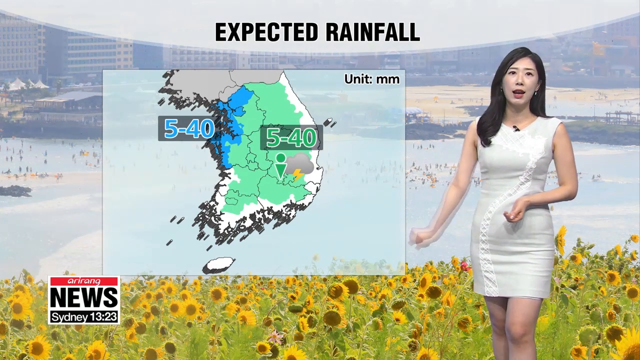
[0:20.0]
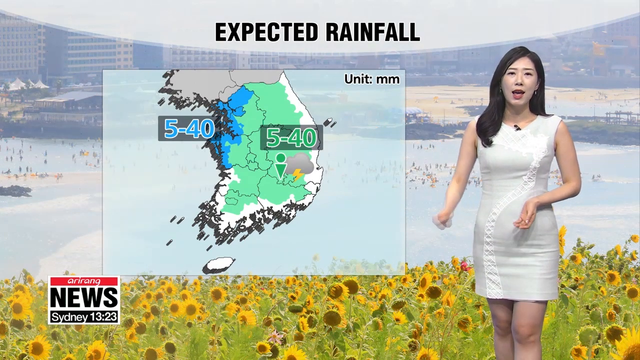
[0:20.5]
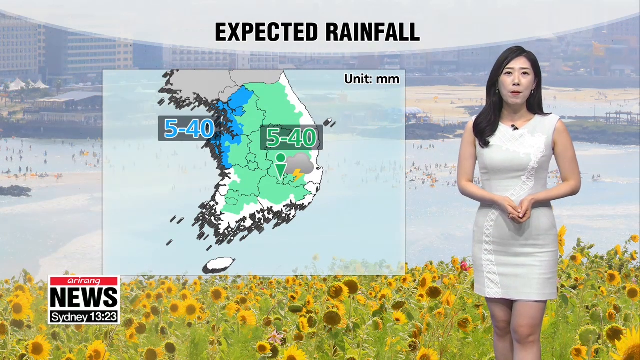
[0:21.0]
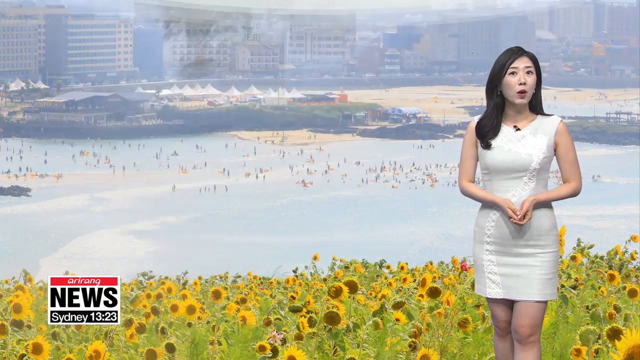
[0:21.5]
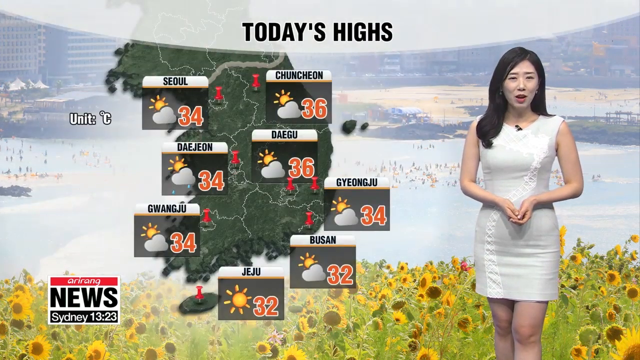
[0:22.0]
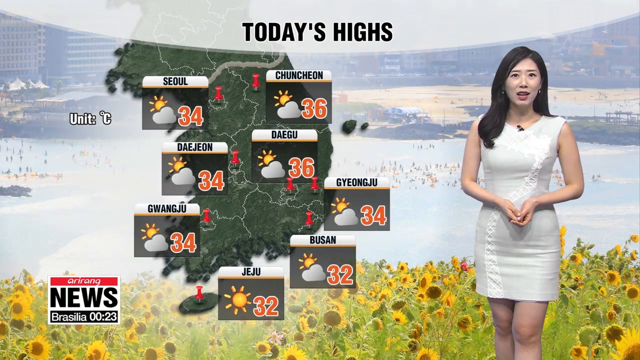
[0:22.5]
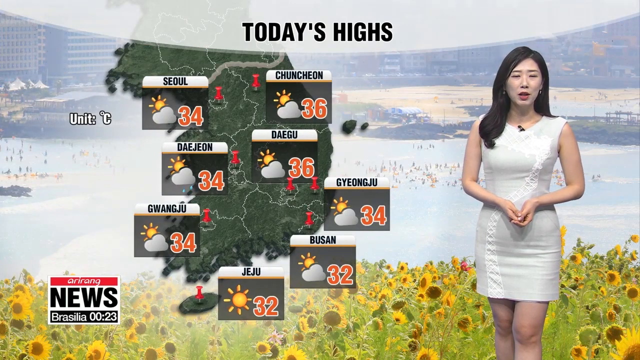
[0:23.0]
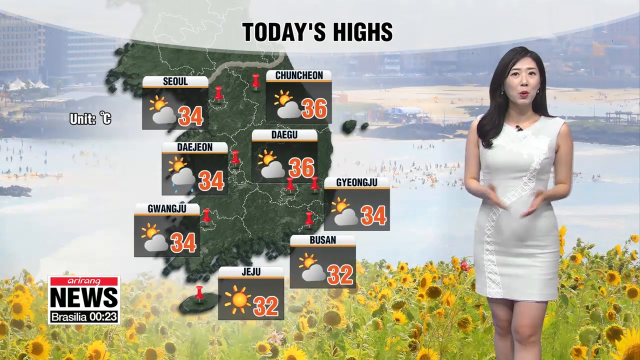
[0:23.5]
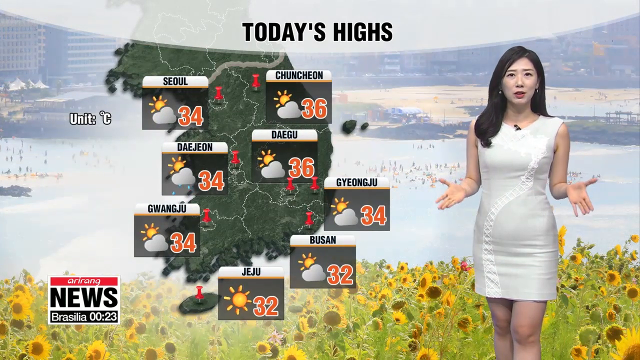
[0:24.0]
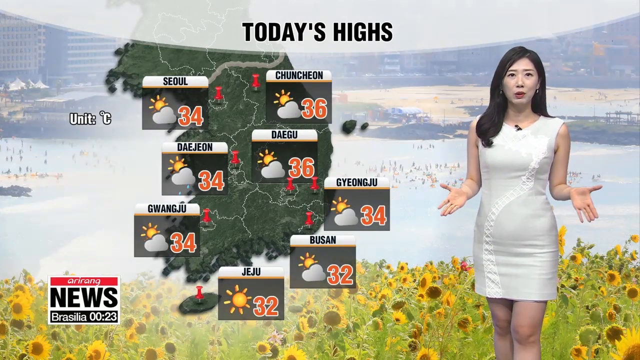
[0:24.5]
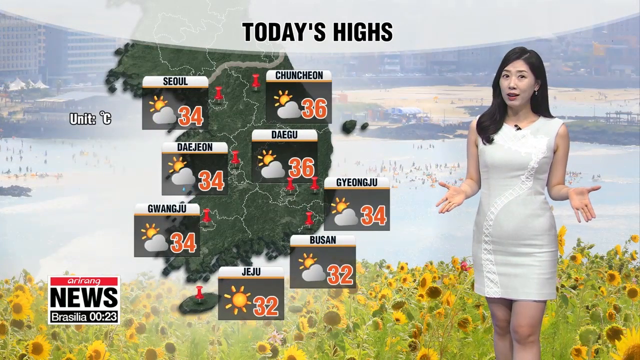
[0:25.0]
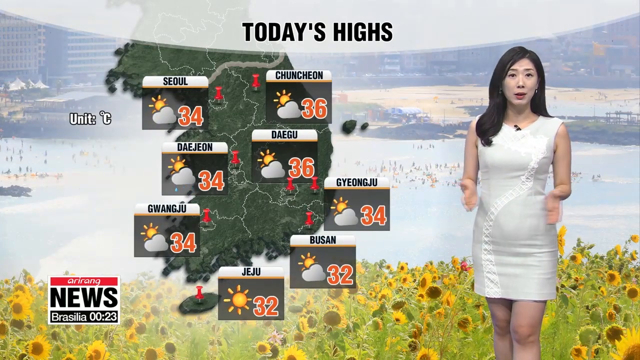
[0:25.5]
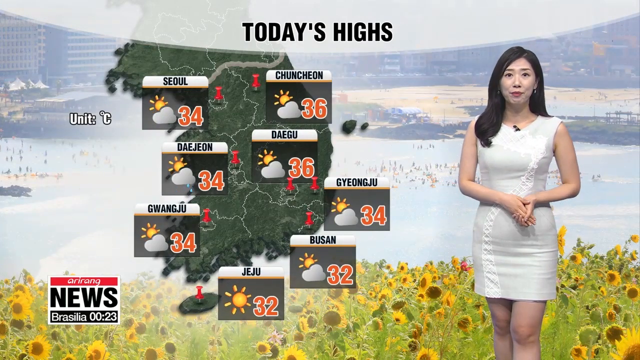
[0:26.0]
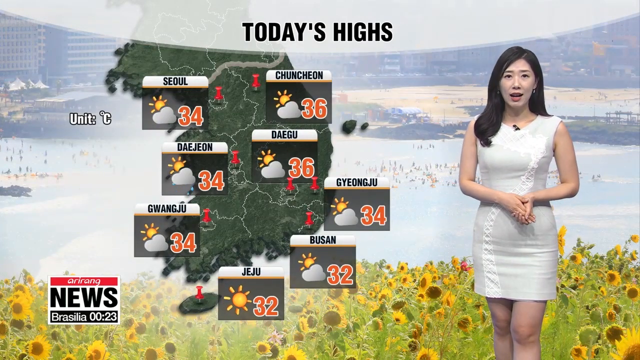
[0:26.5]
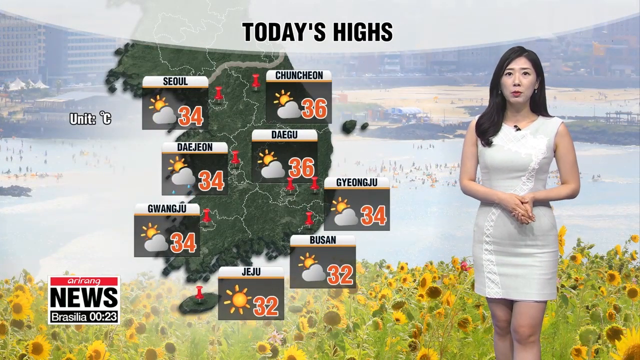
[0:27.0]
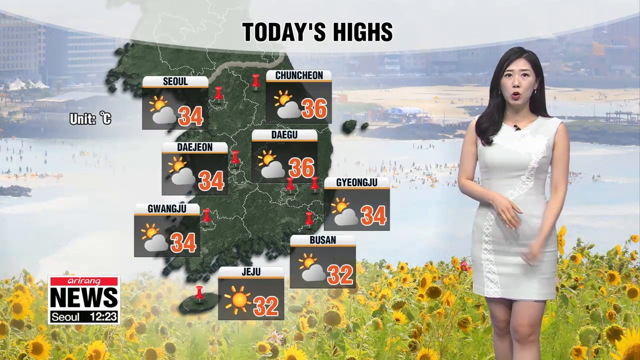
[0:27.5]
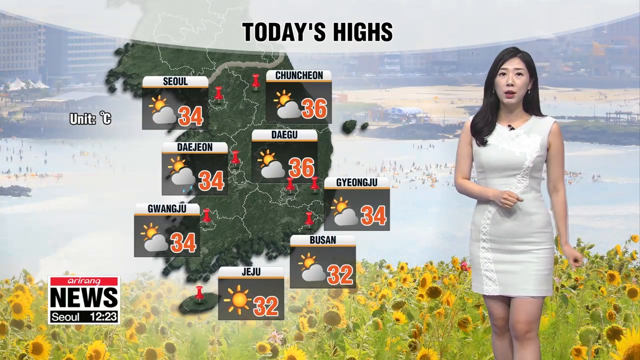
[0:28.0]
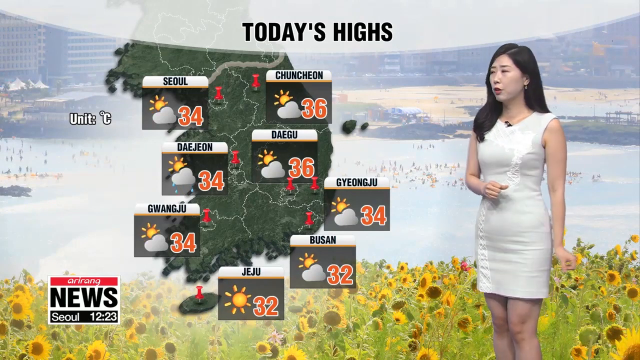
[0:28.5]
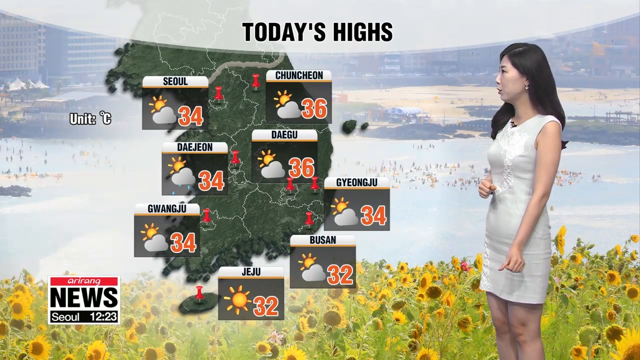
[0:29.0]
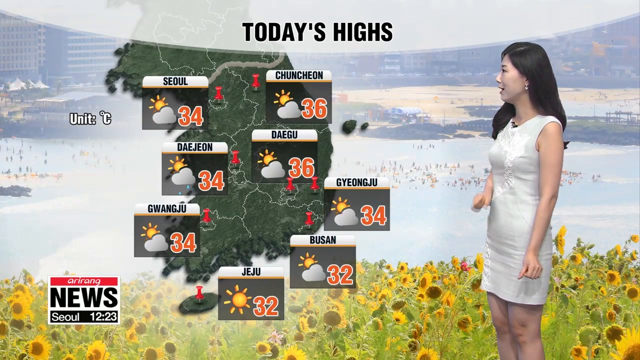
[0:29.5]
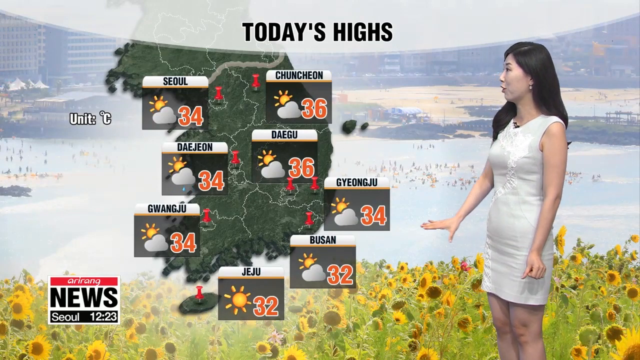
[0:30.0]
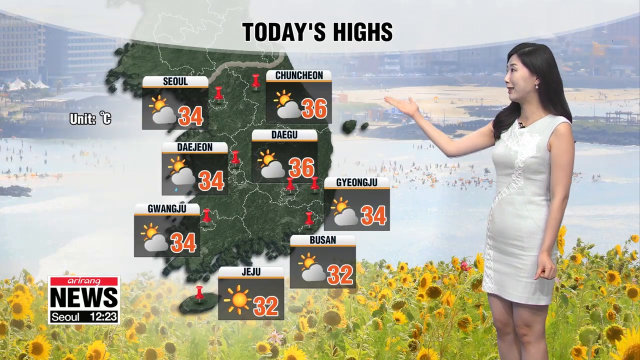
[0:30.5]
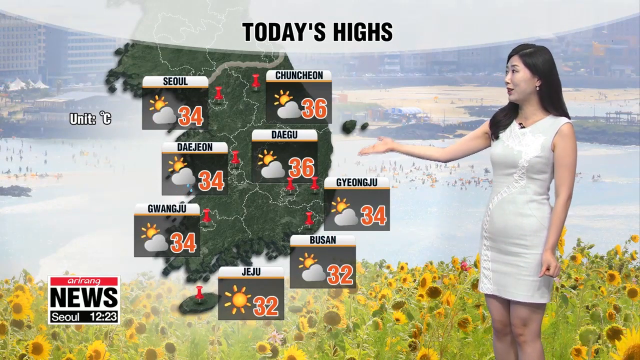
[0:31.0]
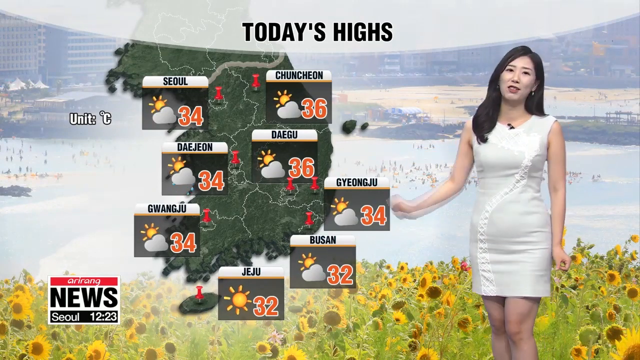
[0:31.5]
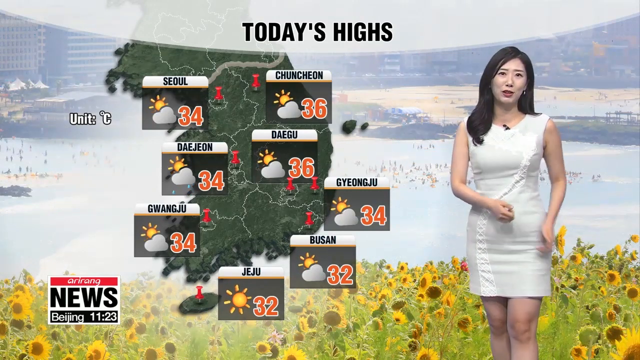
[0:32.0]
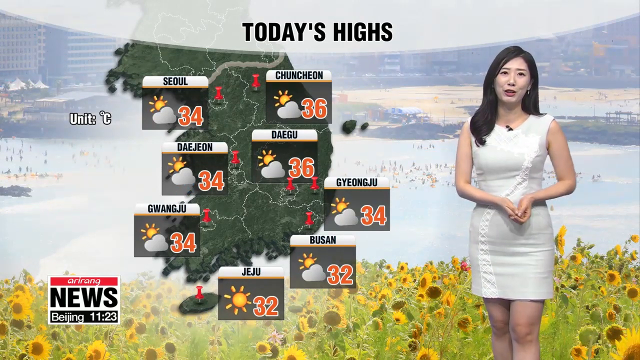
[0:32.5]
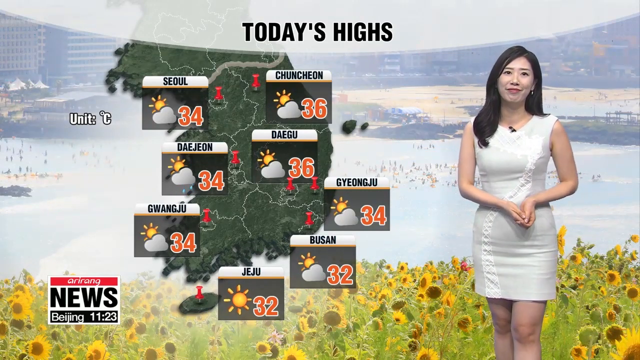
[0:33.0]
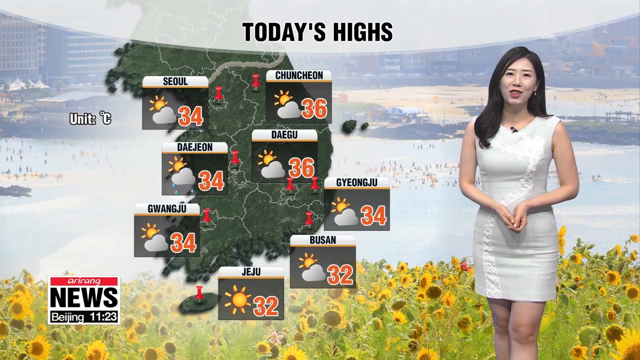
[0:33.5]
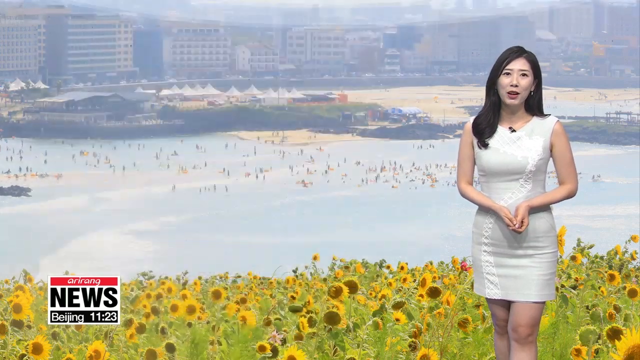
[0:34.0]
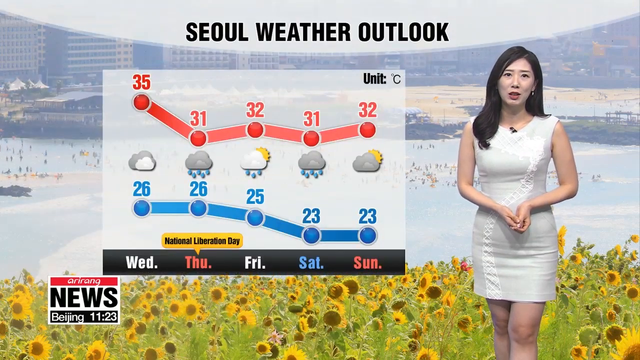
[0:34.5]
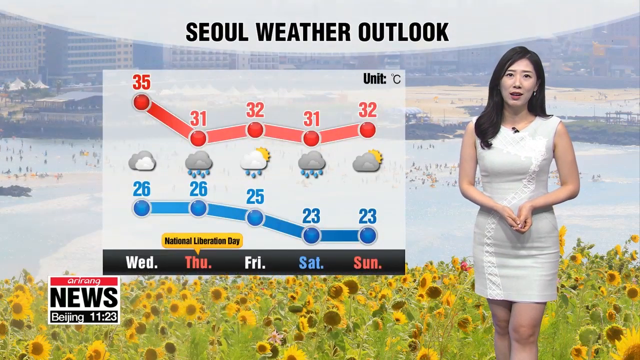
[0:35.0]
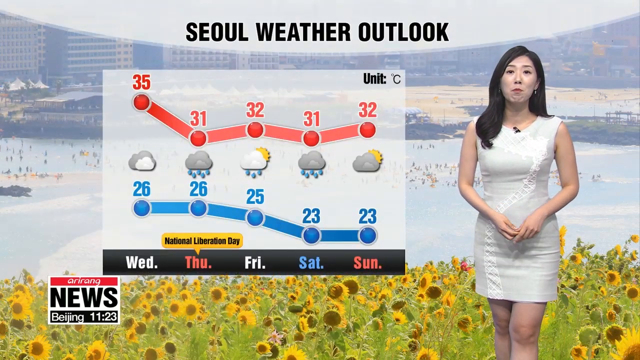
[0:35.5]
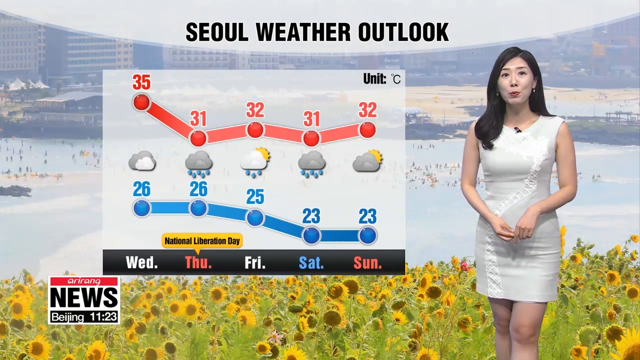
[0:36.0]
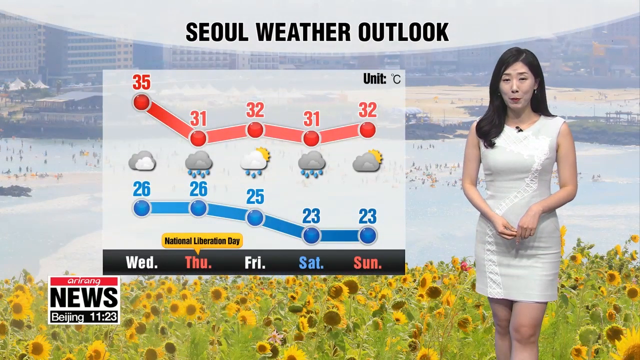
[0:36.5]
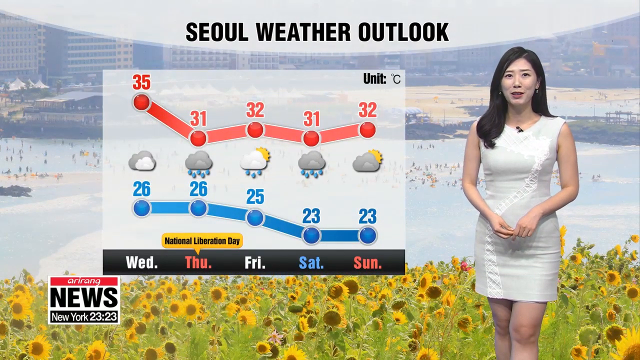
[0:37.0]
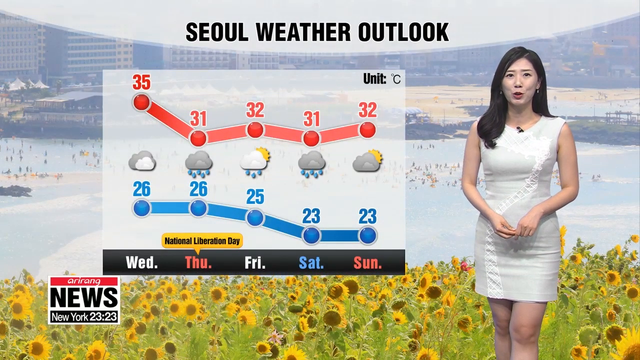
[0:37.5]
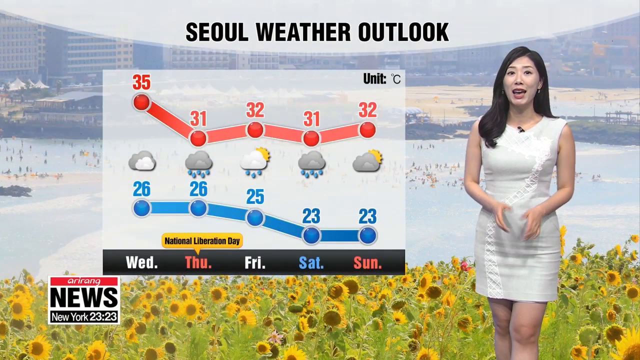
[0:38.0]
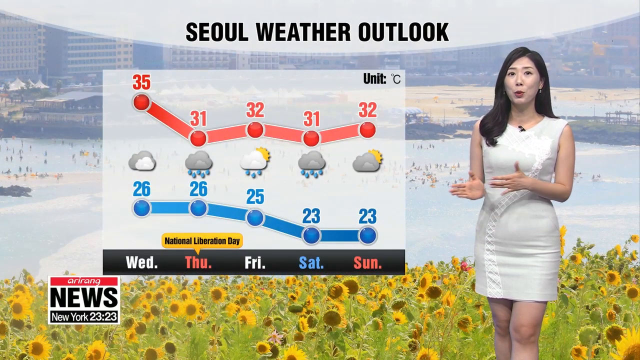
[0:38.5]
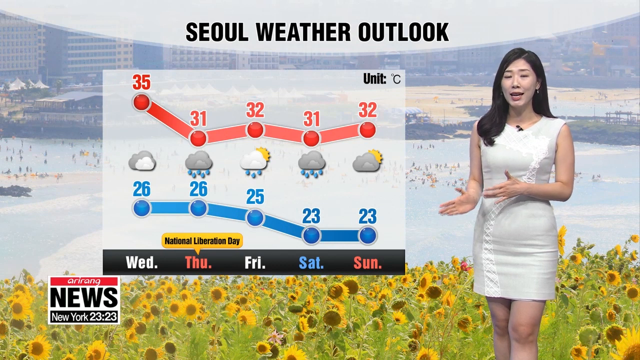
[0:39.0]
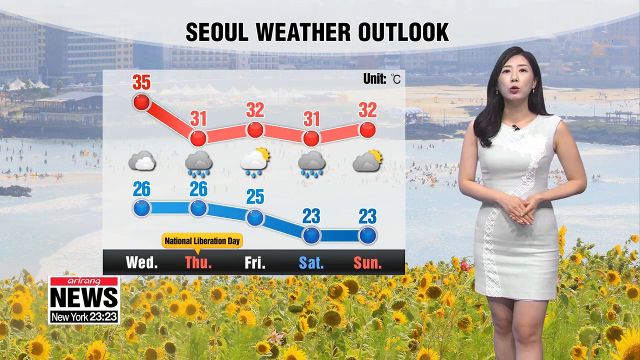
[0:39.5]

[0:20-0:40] The background remains the same, but the upper text bubble now reads "expected rainfall" in black font. The map in the center has changed: it is color-coded blue on the left and upper left side, with a gray text box reading "5 to 40". There is also an area with green coding, and a new gray text box says "5 to 40" in green. The woman gestures with her right arm toward the map. In the lower left-hand side is a logo box with a white background, a red box at the top with illegible text, and "NEWS" in all caps in the middle. A black box at the bottom lists times for different global cities, including Seoul, Beijing and New York. The map in the middle changes to show temperature changes. The woman, standing on the right of the screen, gestures toward the temperature change map with her elbows tucked in at her sides and her hands splayed in a chopping fashion, fingers also splayed, as she moves her arms and hands toward the map.